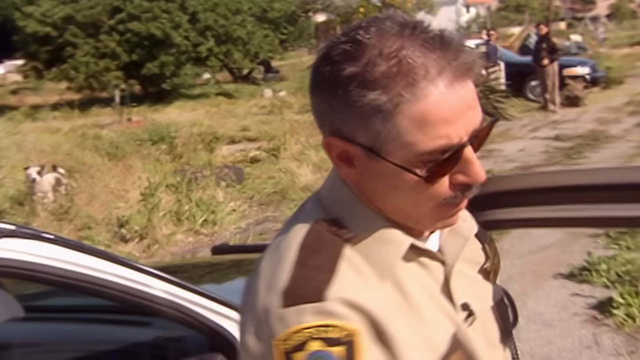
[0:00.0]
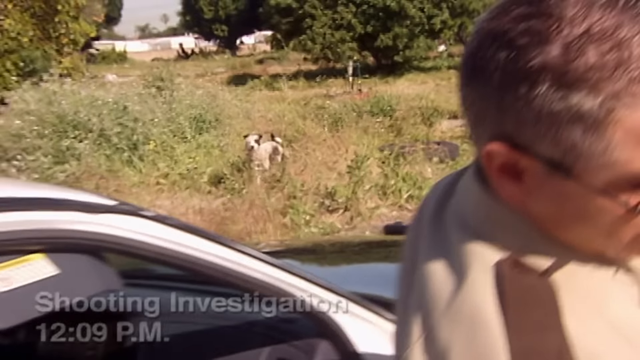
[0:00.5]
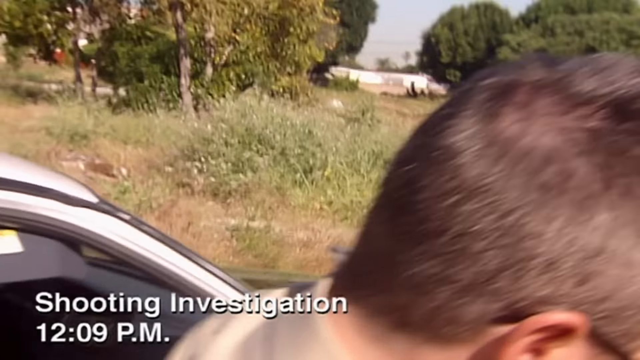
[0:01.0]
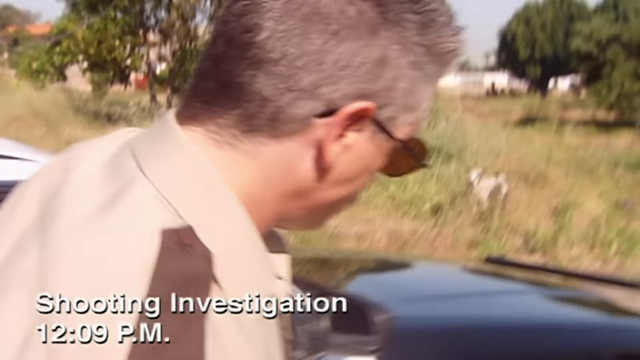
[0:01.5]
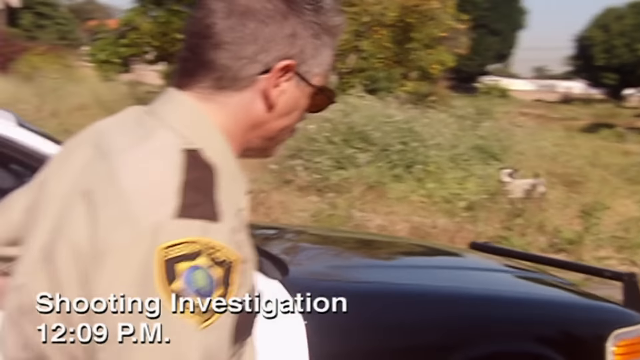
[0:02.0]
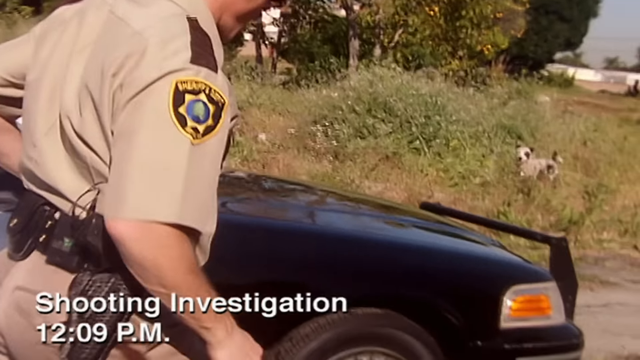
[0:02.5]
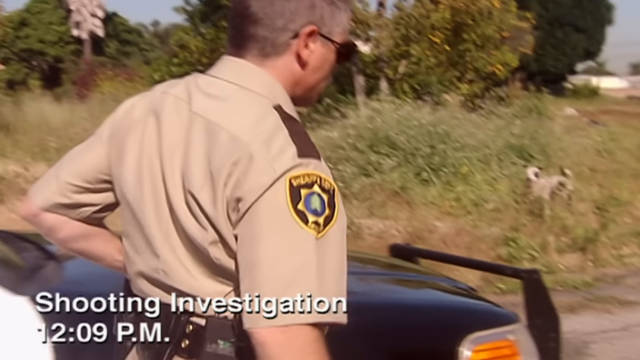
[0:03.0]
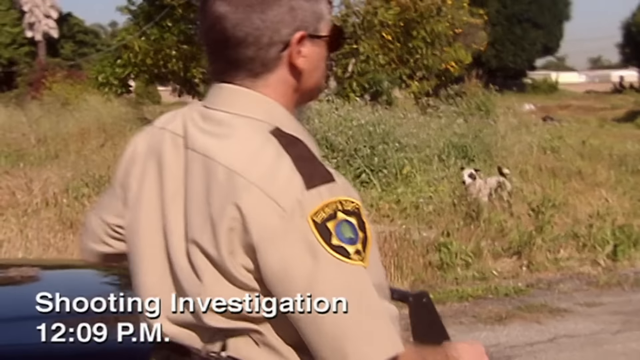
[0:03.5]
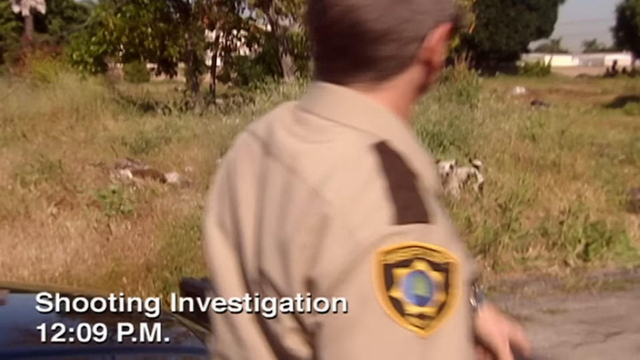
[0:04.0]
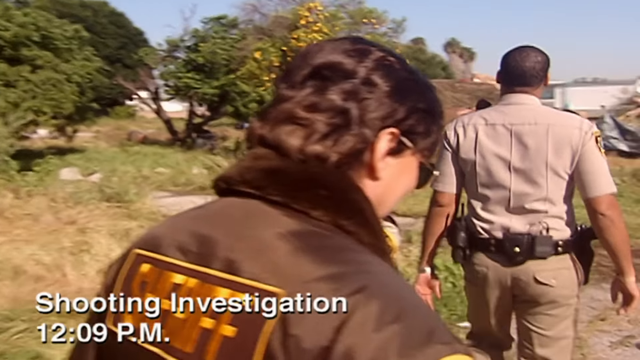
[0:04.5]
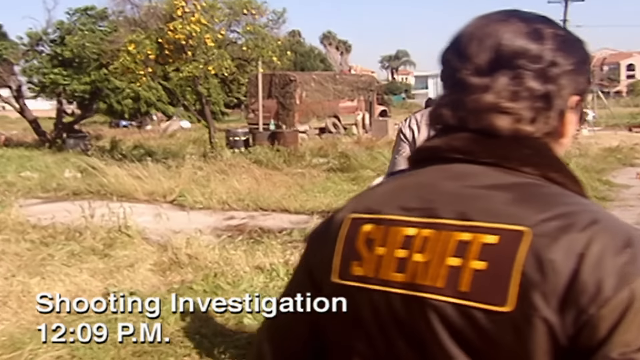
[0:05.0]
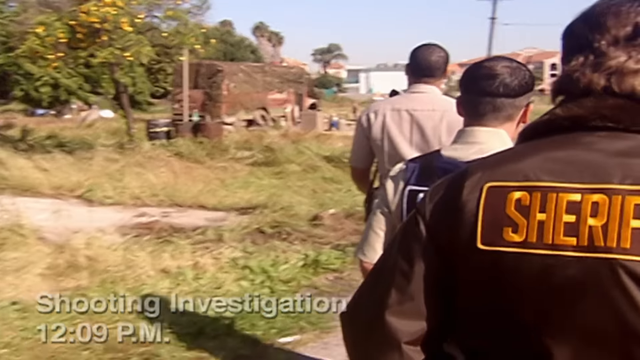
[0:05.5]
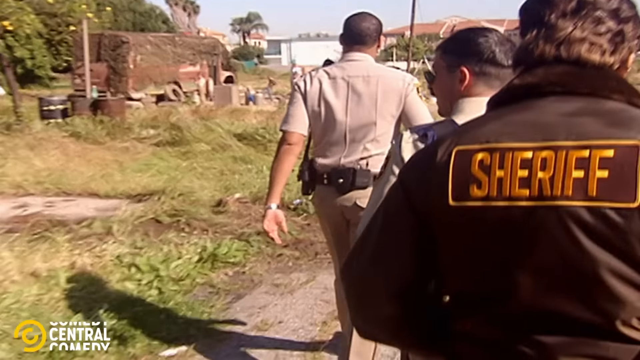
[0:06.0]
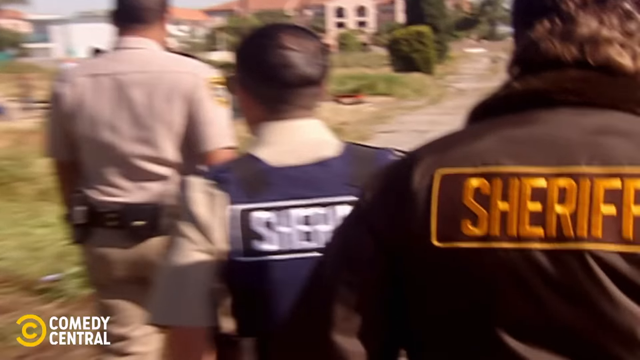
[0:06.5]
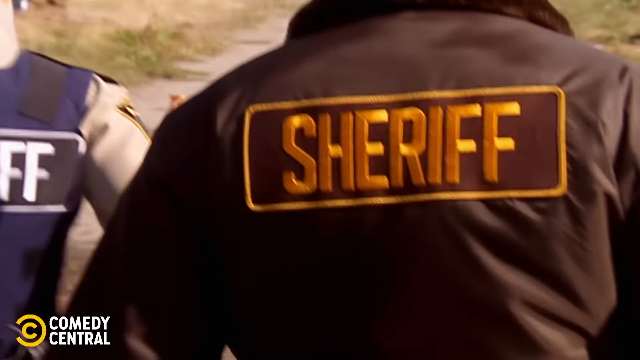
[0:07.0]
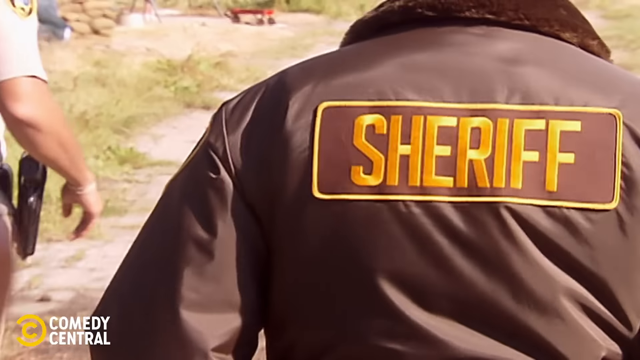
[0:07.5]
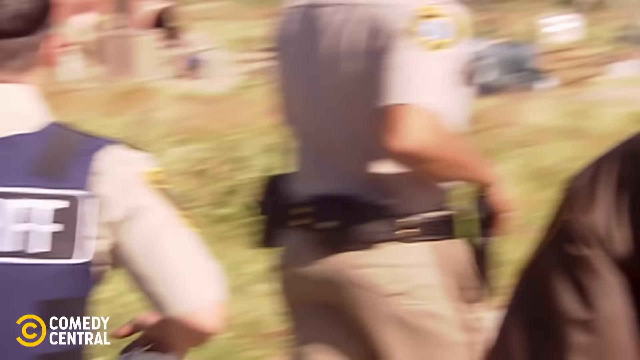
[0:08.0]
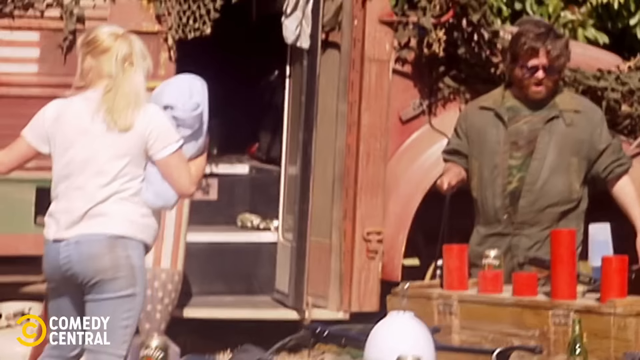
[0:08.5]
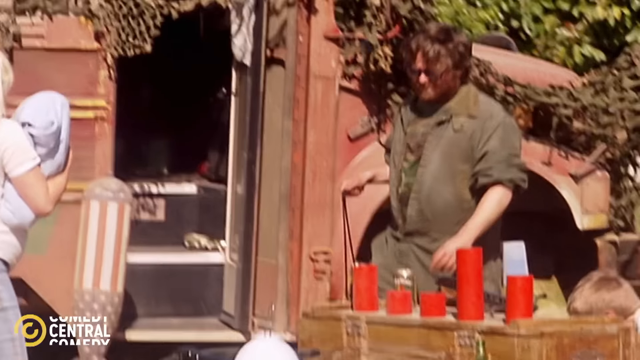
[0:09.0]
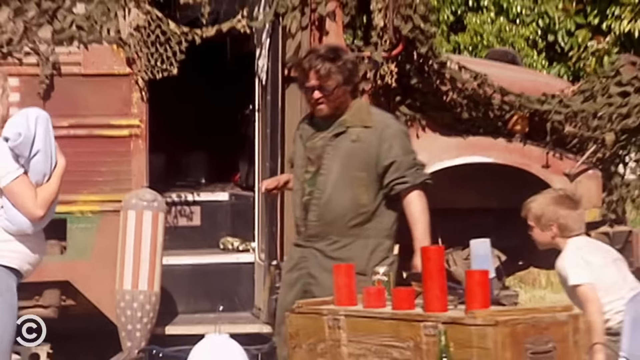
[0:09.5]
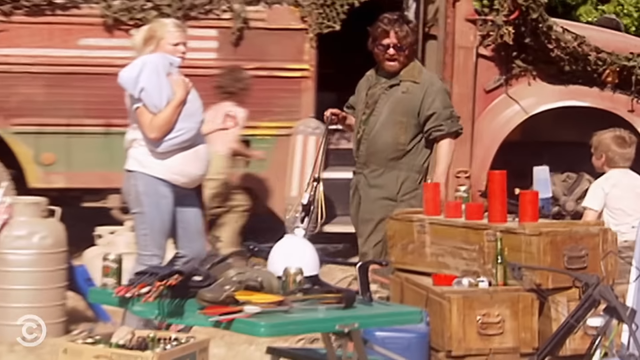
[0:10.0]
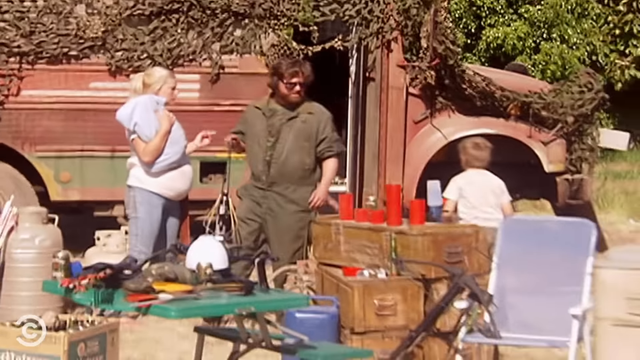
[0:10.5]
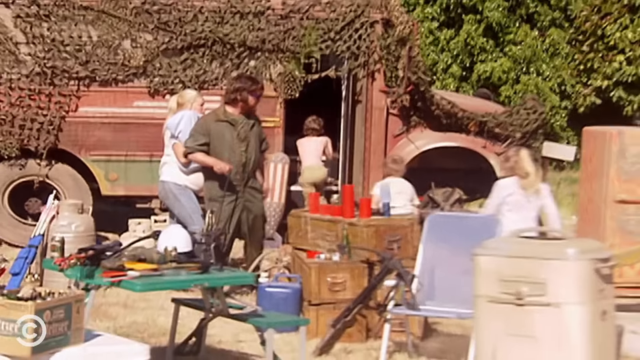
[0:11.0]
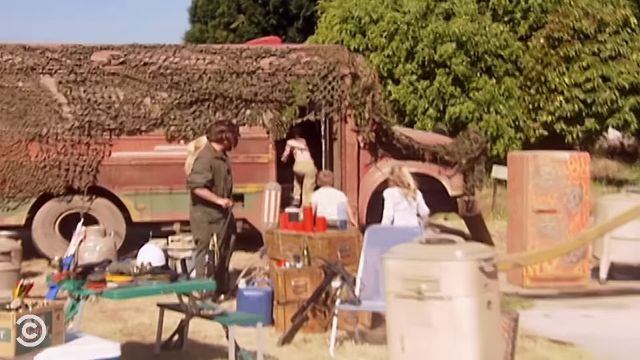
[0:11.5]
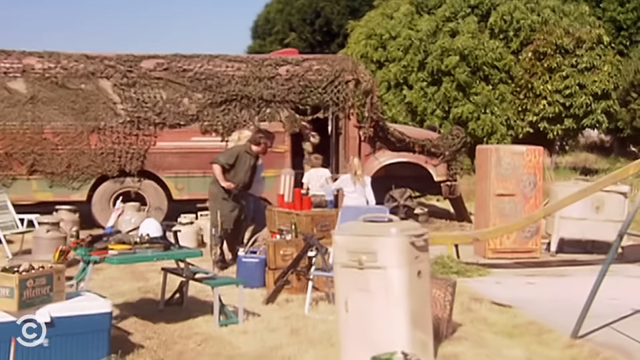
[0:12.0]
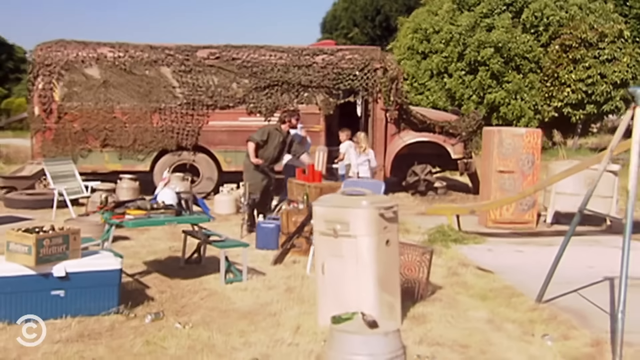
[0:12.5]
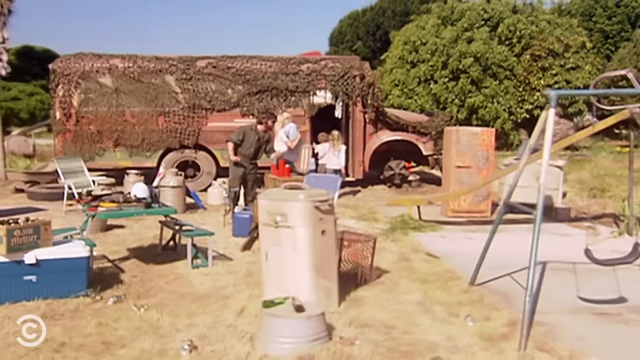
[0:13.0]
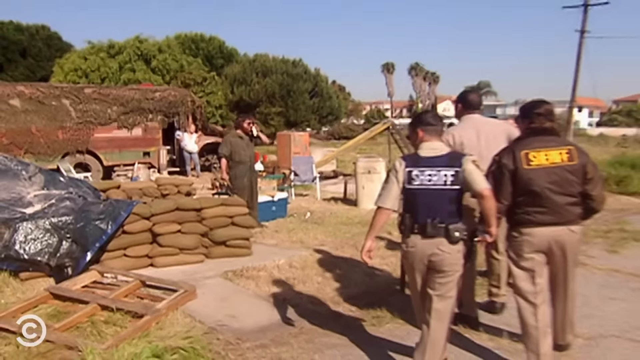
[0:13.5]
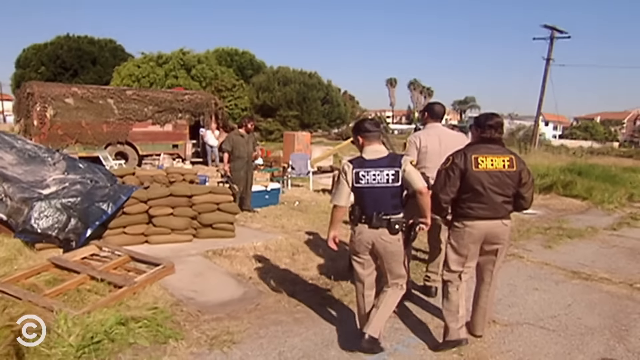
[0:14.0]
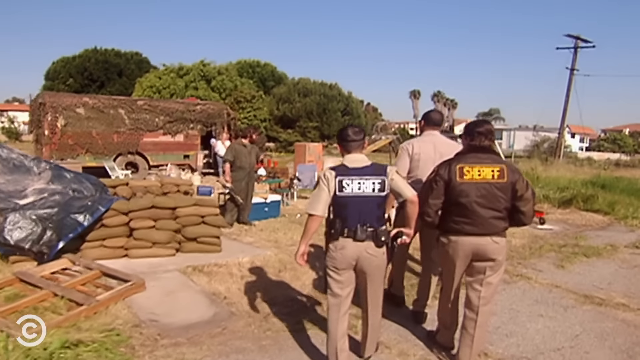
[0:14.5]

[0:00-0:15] Some cops get out of a cop car. One wears a sheriff jacket, another wears a sheriff vest, and the third wears nothing that says sheriff but is still in a cop outfit. The three of them walk down a road in a sort of deserty area with greenery that looks more like dead. They walk toward what is almost like a camp setup: there is an old rusty bus, and next to it a playground with a bunch of barrels. Dogs walk around the area. There is a family: a guy wearing a jumpsuit, a mom carrying a baby, and kids. As the cops walk up, the mom and kids get into the bus, seemingly at the father's request. There seems to be a bunch of garbage everywhere; it is a messy area.